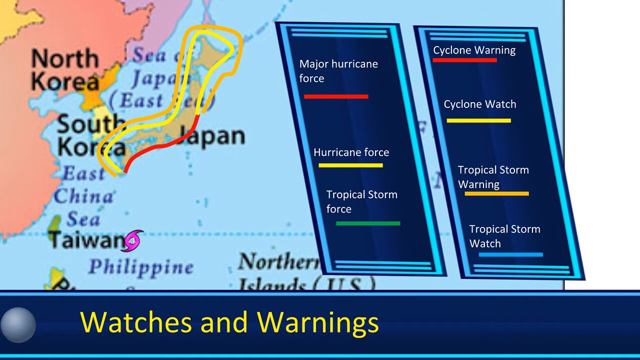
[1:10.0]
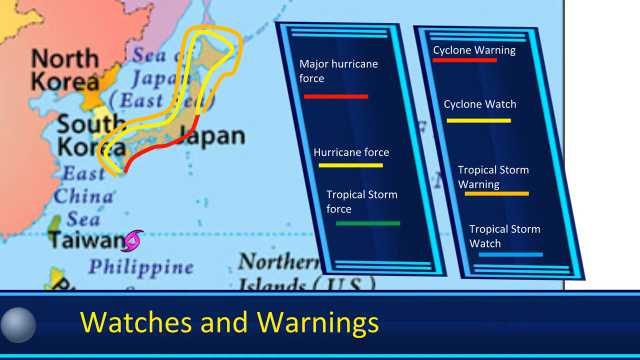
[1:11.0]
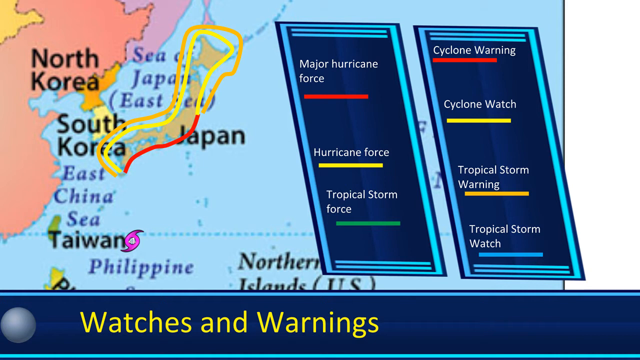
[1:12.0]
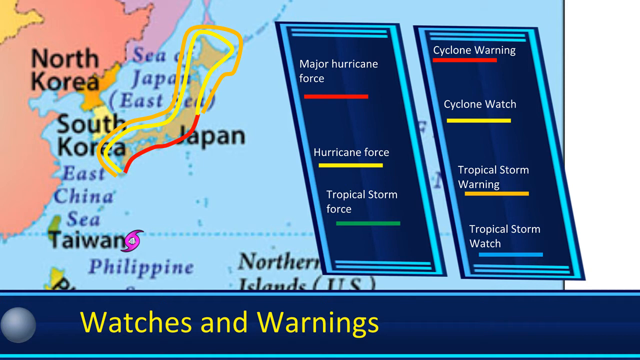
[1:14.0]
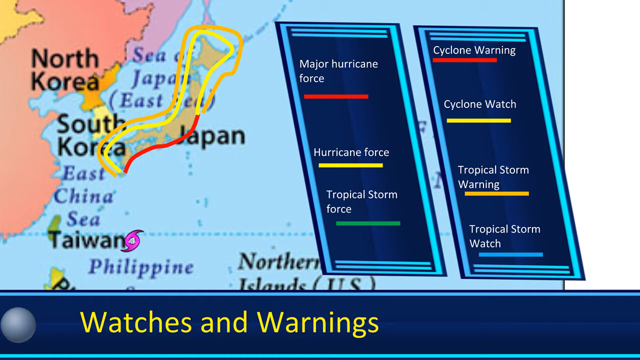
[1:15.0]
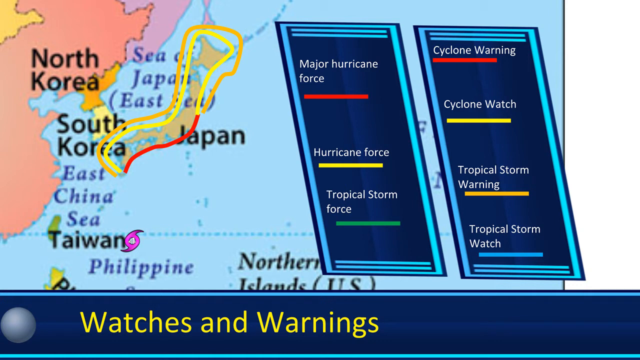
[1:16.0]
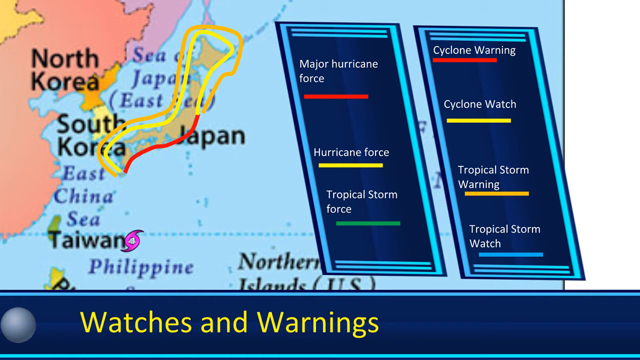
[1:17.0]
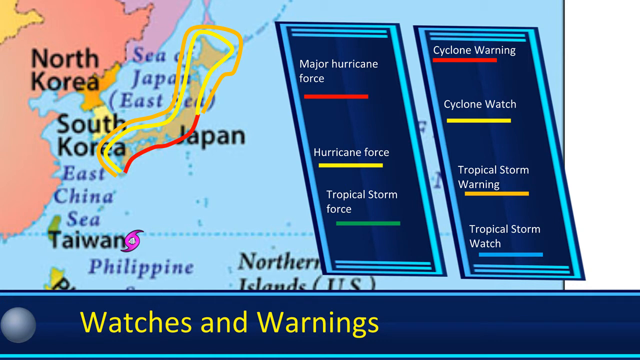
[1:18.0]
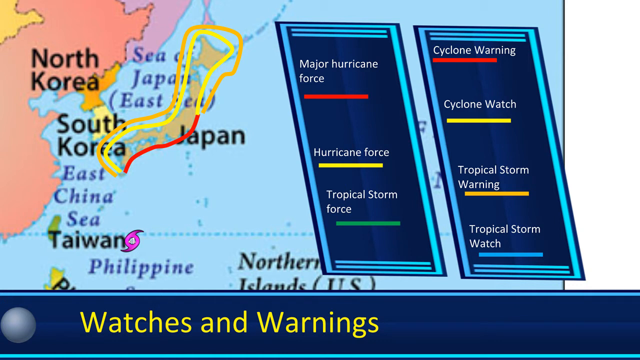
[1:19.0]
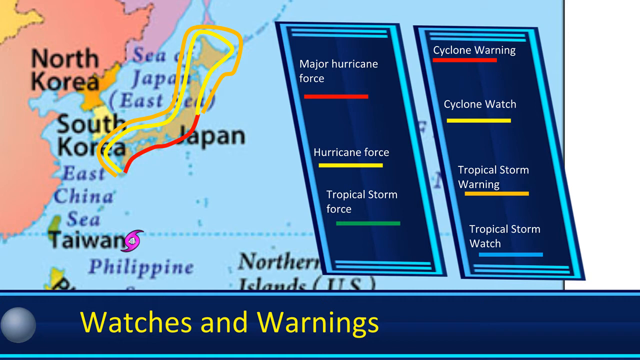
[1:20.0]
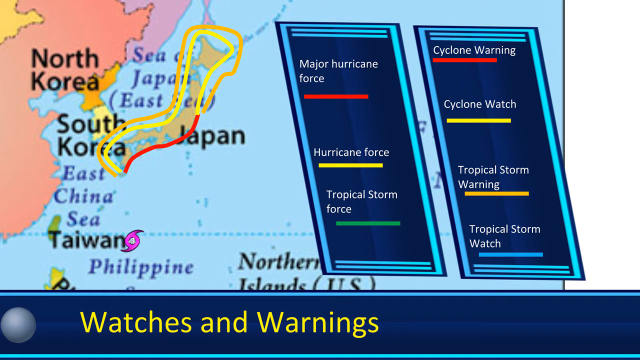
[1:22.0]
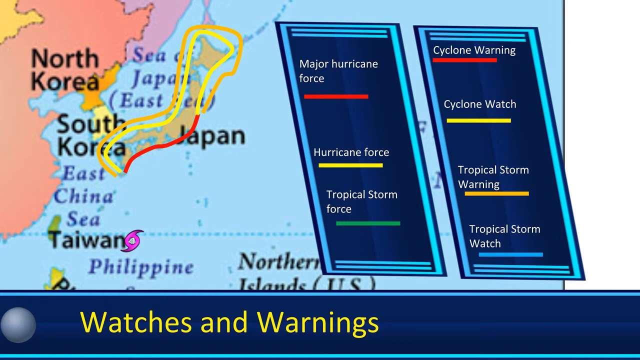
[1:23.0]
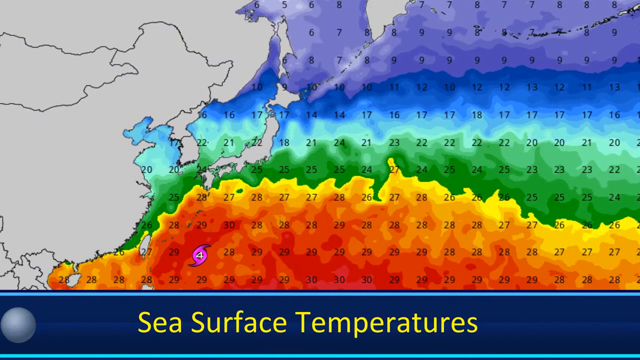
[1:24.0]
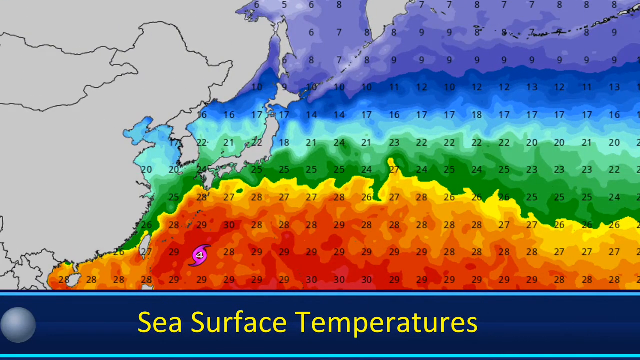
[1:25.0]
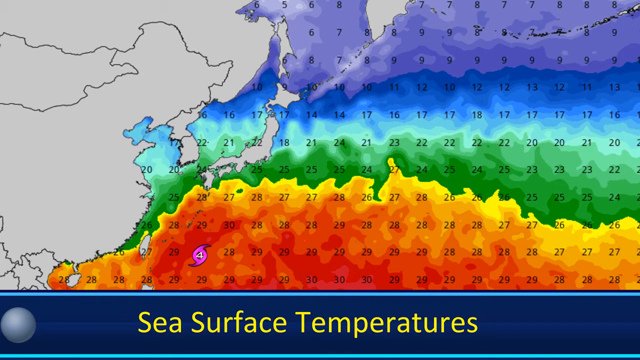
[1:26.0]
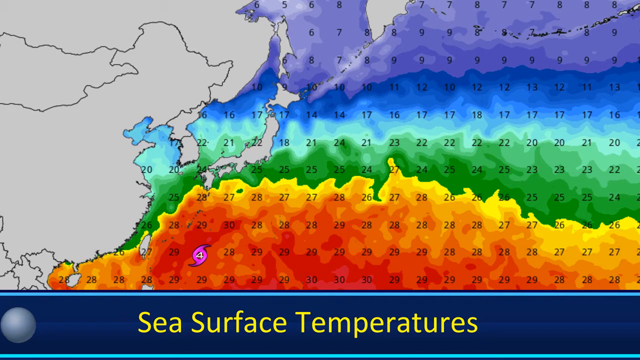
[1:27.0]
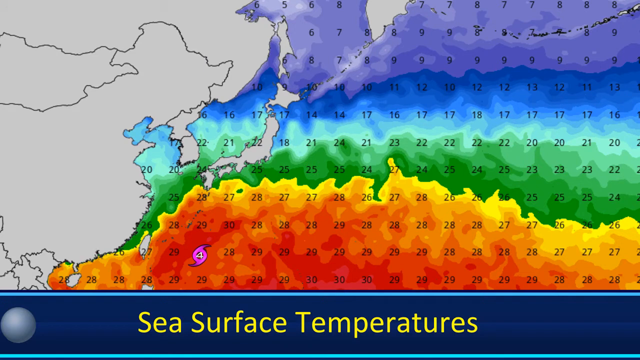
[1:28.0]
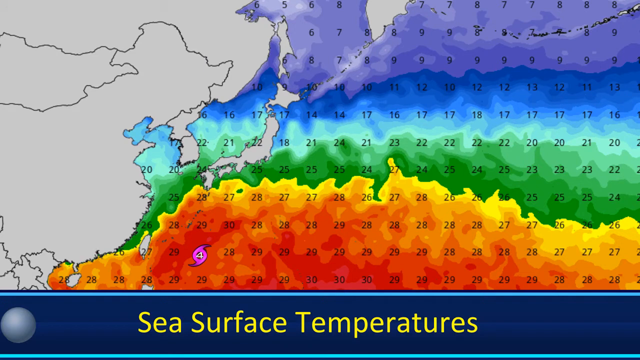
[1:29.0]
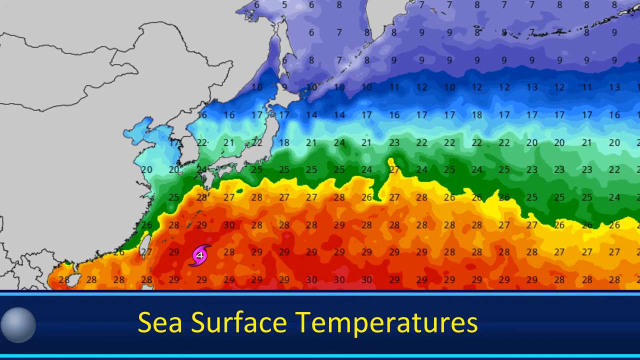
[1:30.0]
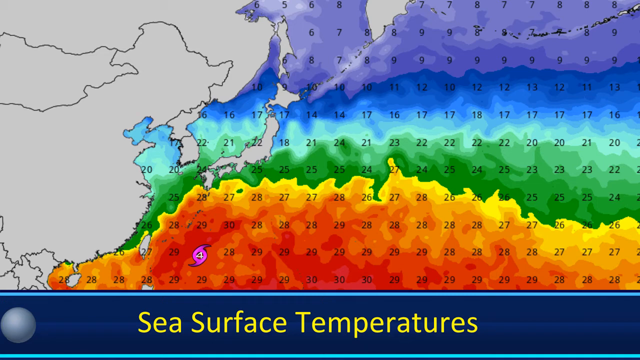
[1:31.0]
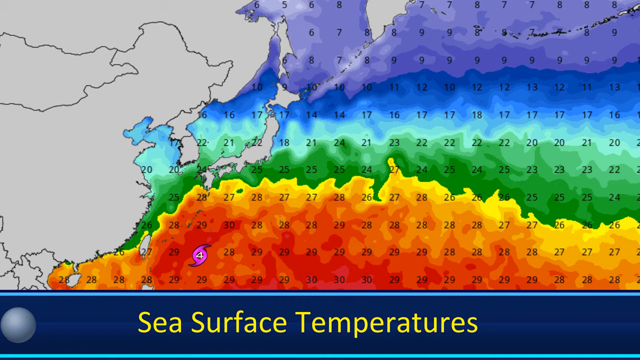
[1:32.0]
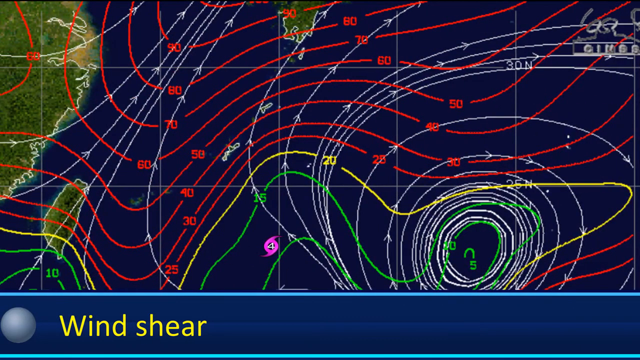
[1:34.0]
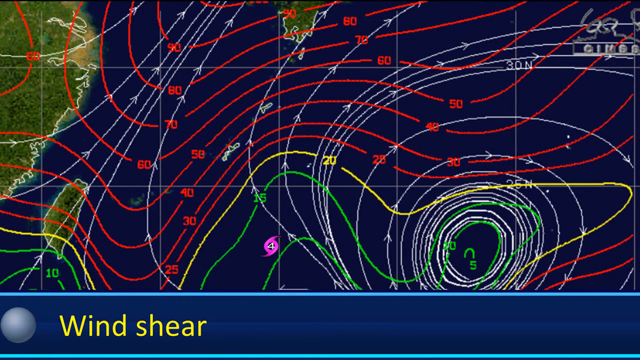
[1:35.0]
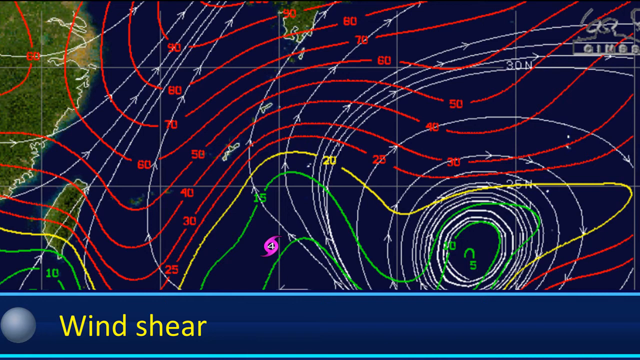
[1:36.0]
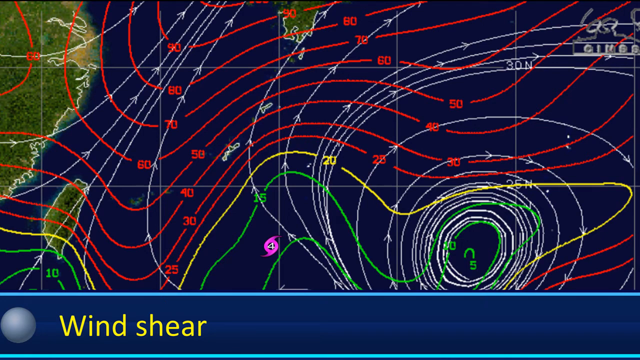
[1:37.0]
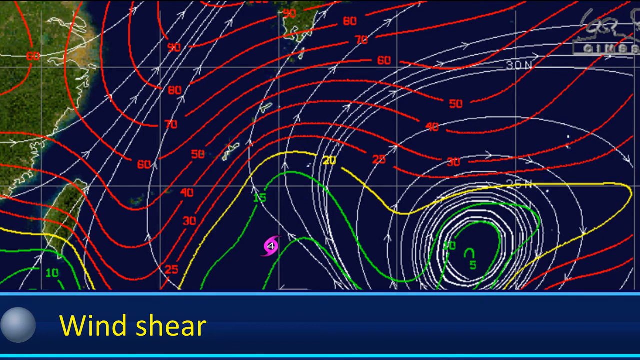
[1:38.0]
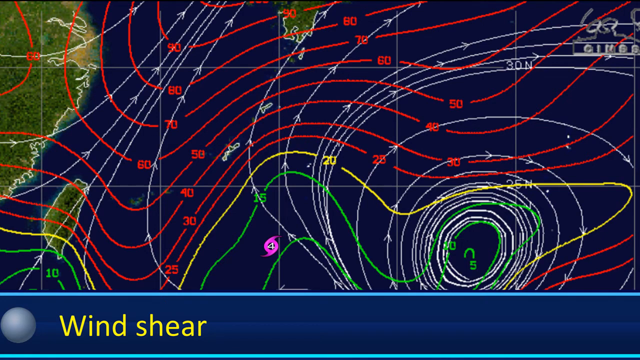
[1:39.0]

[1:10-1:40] The watches and warnings screen continues, showing an outline around Japan in different colors. A key legend on the right side shows what the colors mean: red is major hurricane force and also a cyclone warning, yellow is hurricane force and a cyclone watch, green is tropical storm force, orange is a tropical storm warning, and blue is a tropical storm watch. Lines in these colors are wrapped around Japan. The screen slides to the right to another image of the map area, this time with a different measurement system showing different colors and numbers, and yellow text at the bottom reading "sea surface temperatures". The screen moves to the right once more to a new image with "wind shear" in yellow text at the bottom. On this map, red, yellow and green lines form the storm's shape and show where it is located.